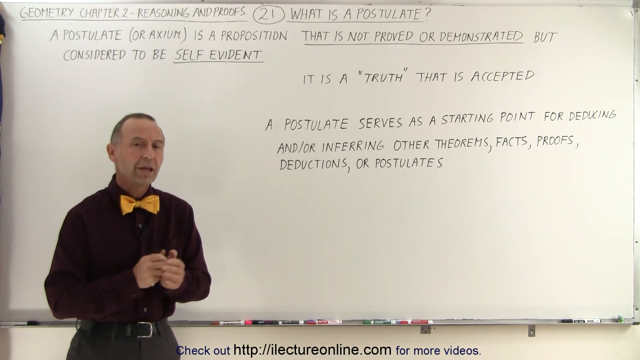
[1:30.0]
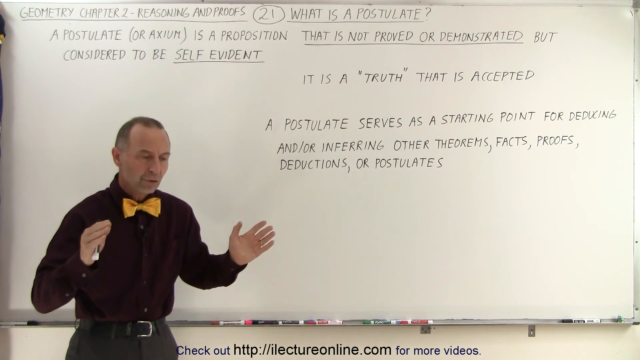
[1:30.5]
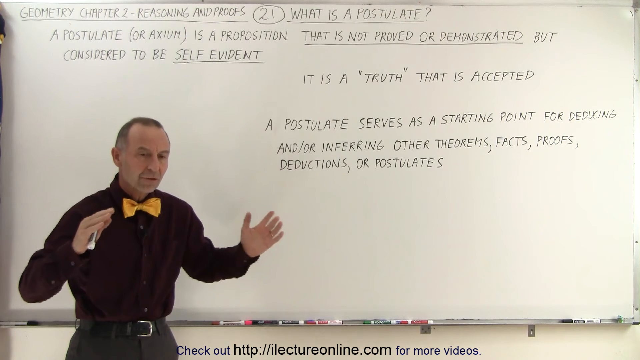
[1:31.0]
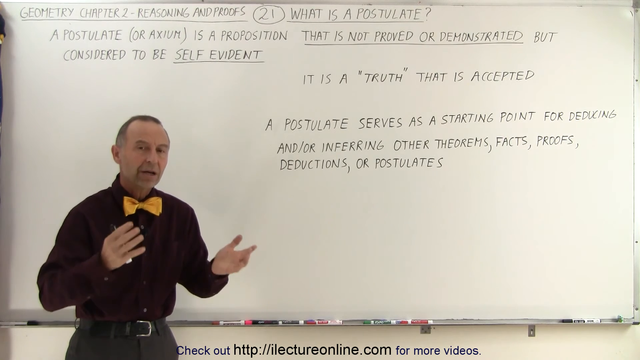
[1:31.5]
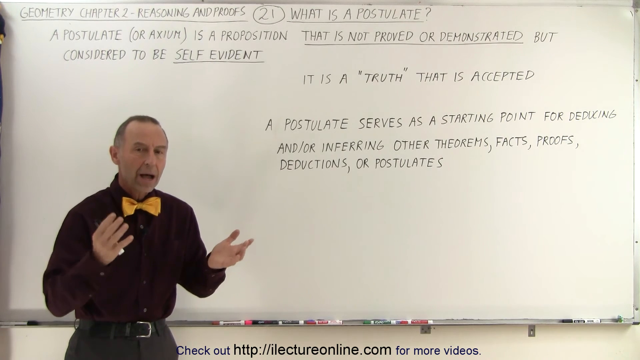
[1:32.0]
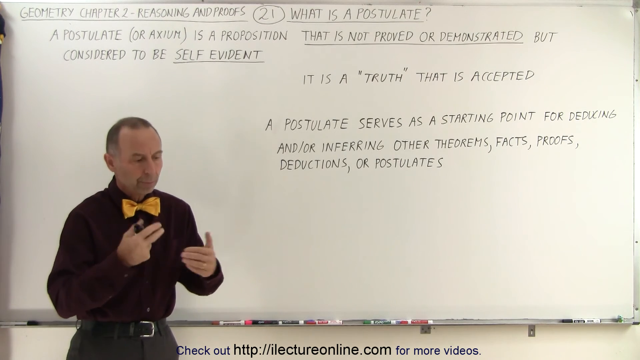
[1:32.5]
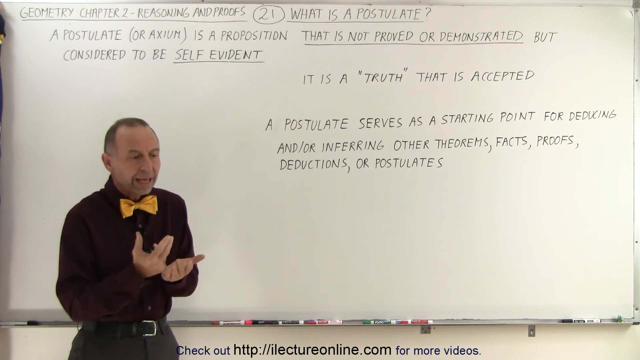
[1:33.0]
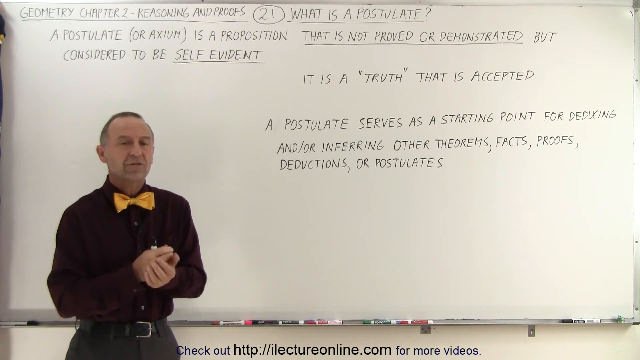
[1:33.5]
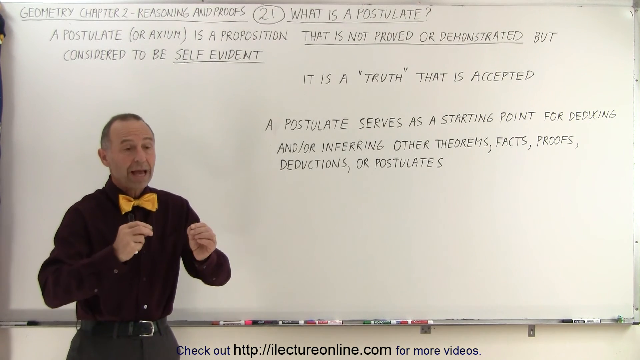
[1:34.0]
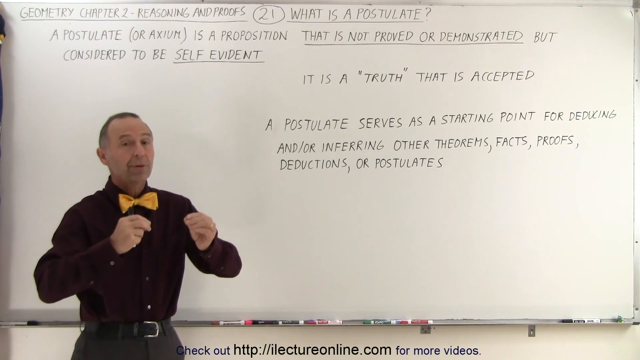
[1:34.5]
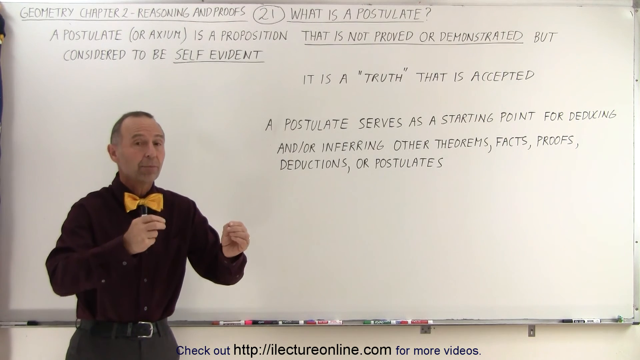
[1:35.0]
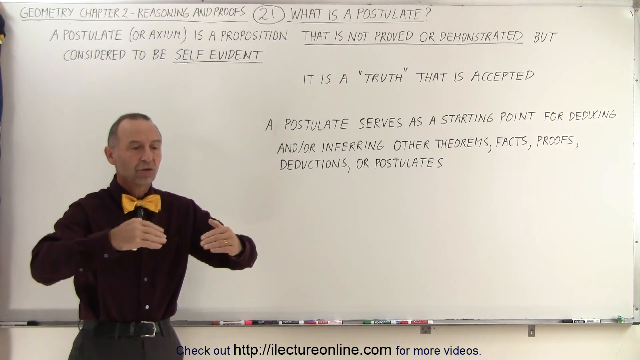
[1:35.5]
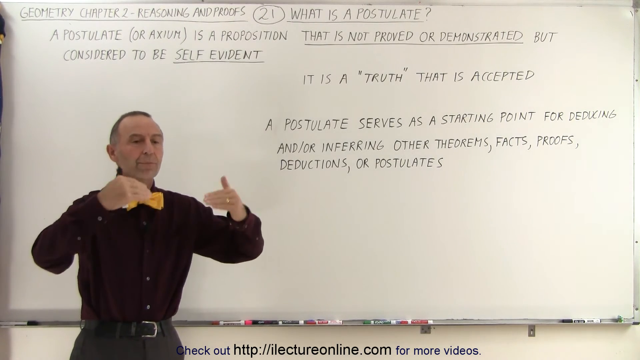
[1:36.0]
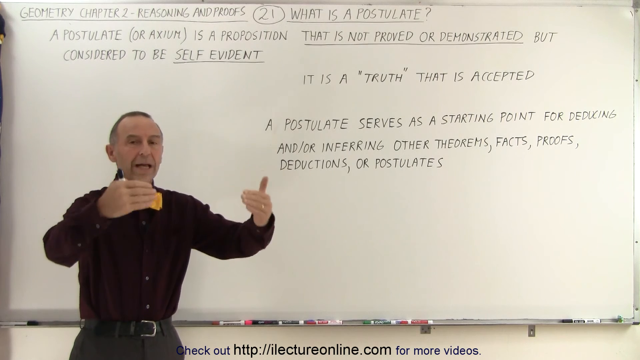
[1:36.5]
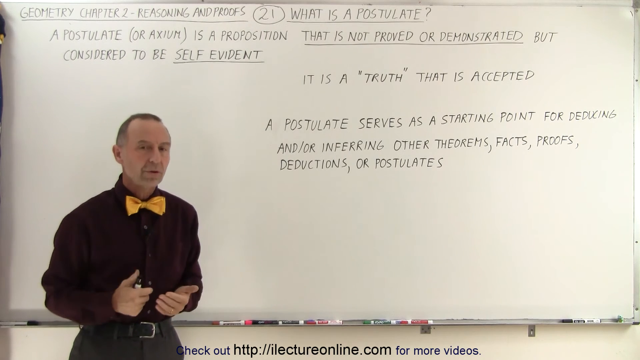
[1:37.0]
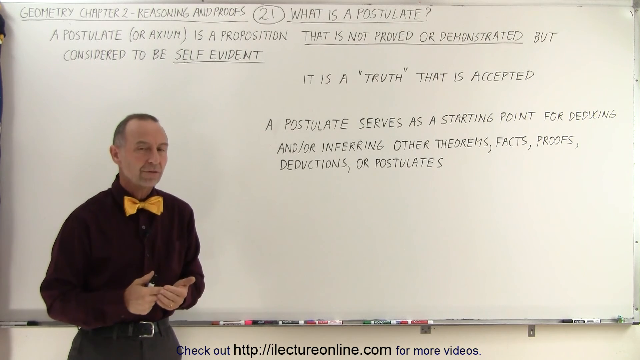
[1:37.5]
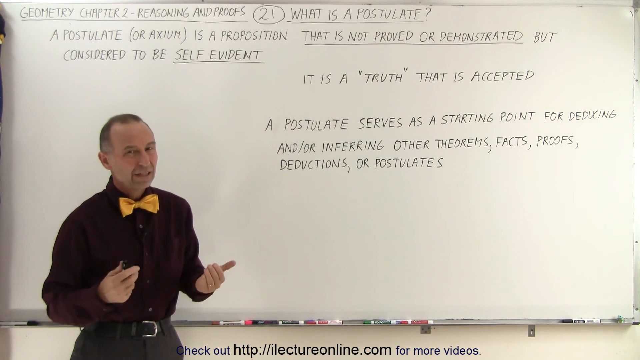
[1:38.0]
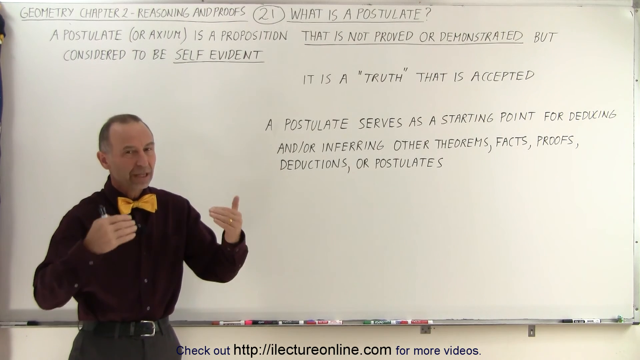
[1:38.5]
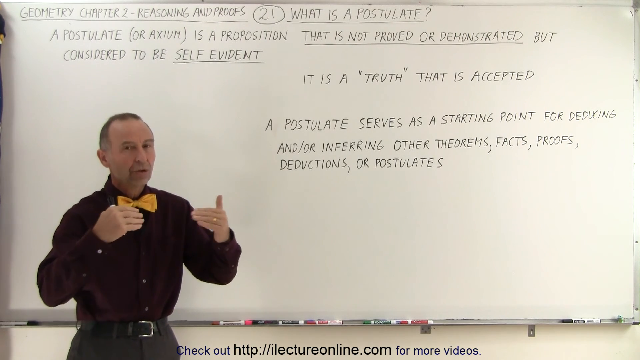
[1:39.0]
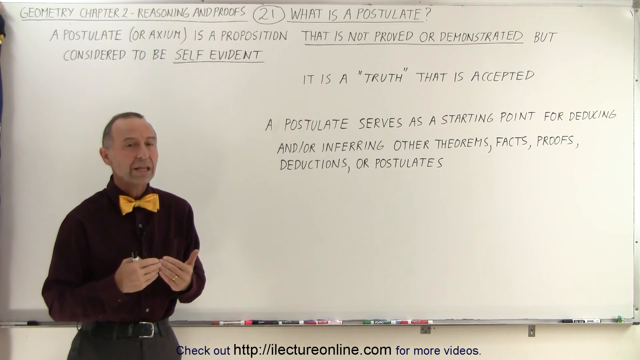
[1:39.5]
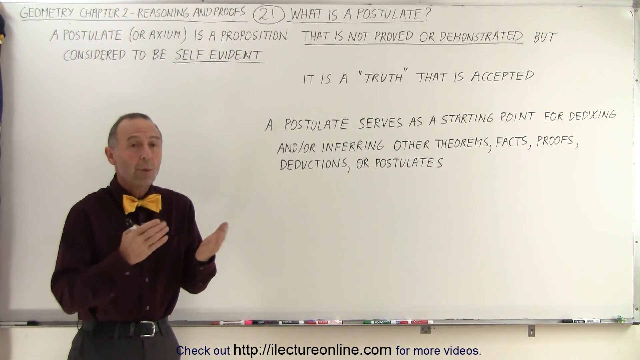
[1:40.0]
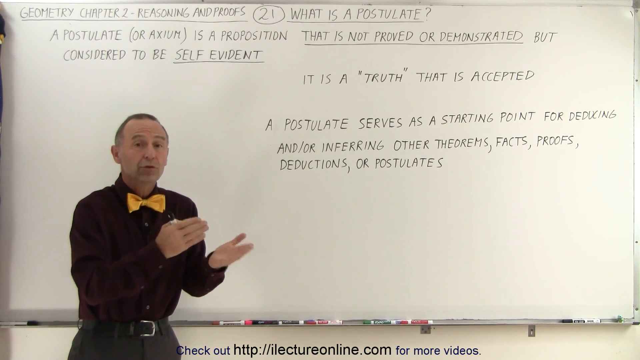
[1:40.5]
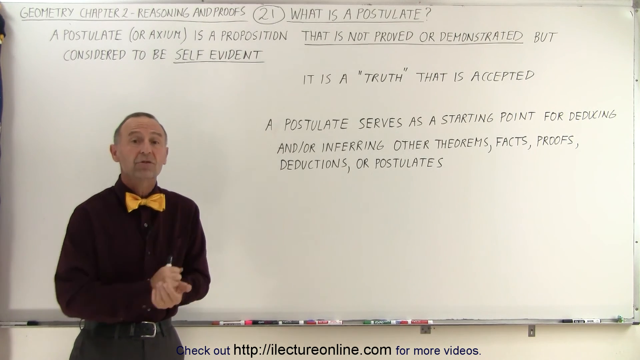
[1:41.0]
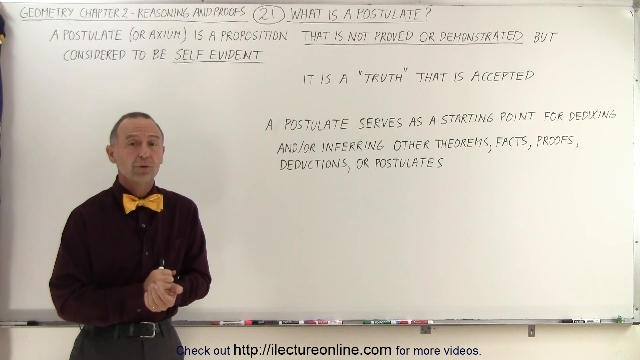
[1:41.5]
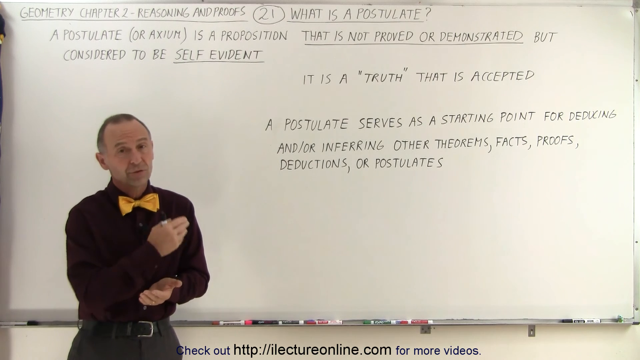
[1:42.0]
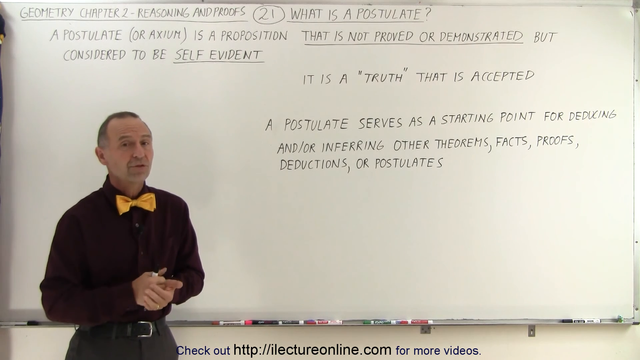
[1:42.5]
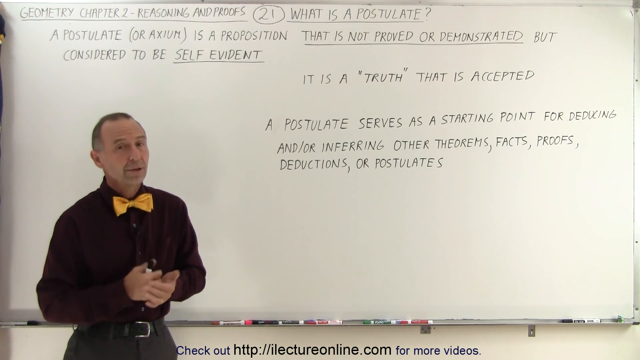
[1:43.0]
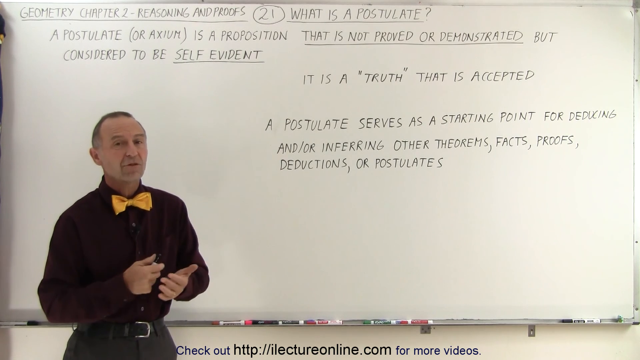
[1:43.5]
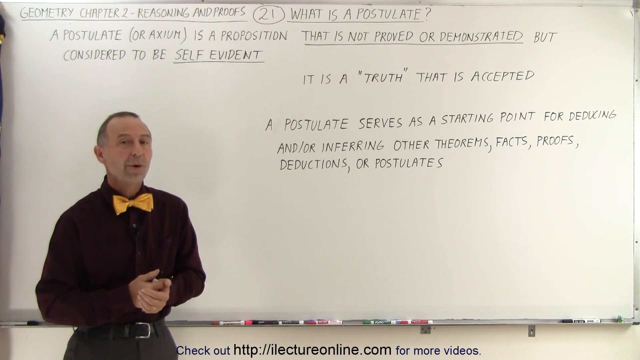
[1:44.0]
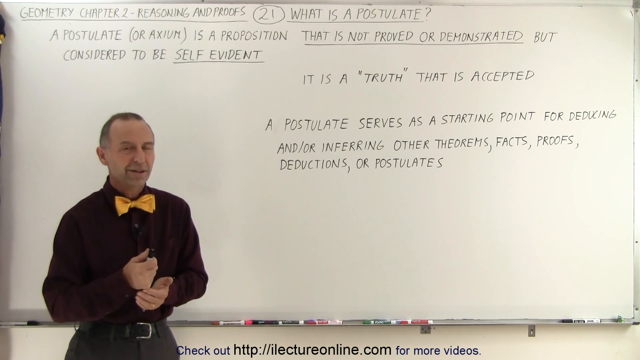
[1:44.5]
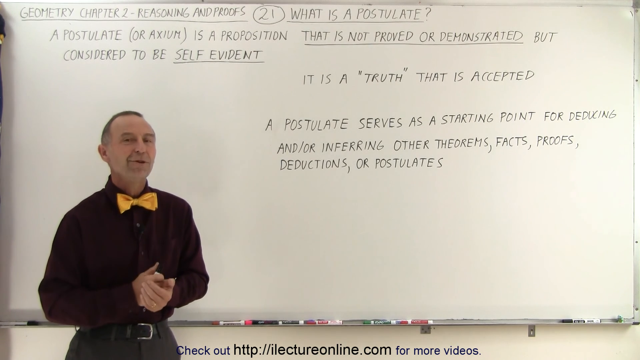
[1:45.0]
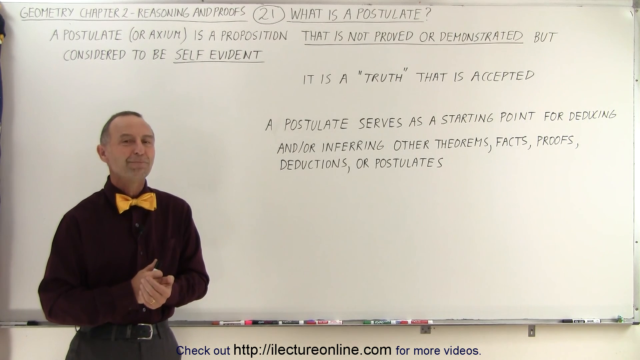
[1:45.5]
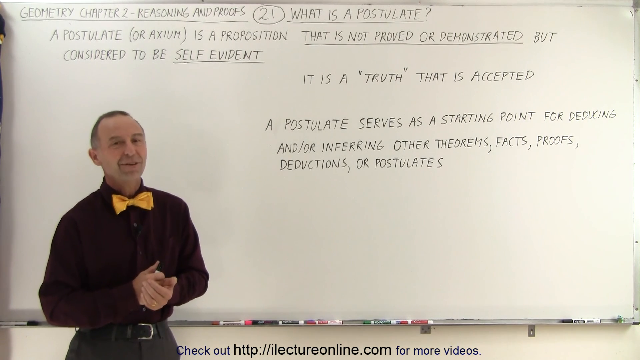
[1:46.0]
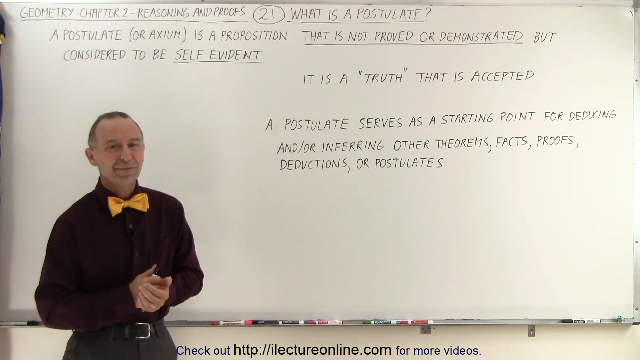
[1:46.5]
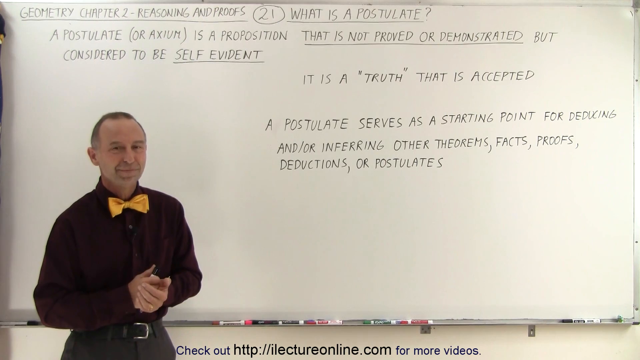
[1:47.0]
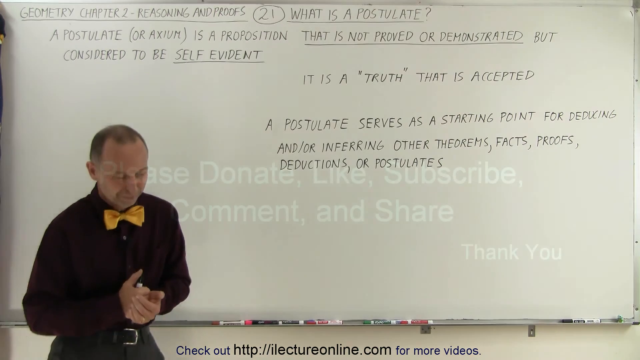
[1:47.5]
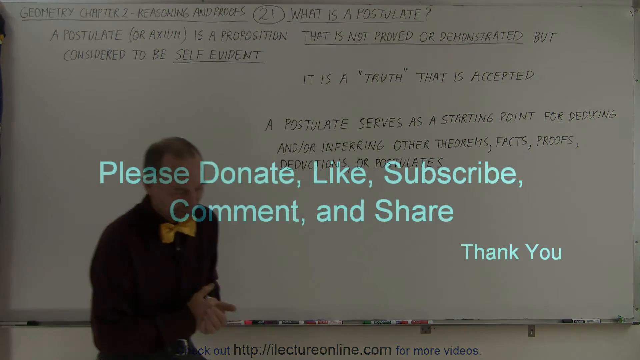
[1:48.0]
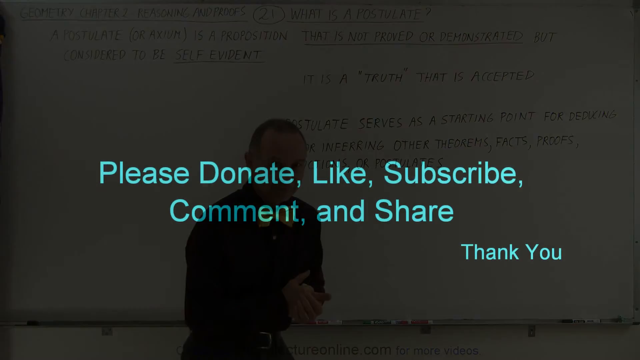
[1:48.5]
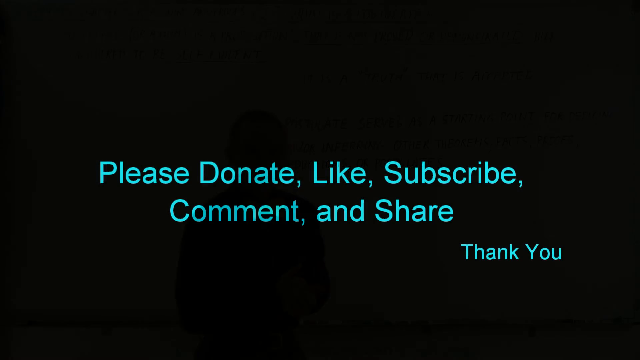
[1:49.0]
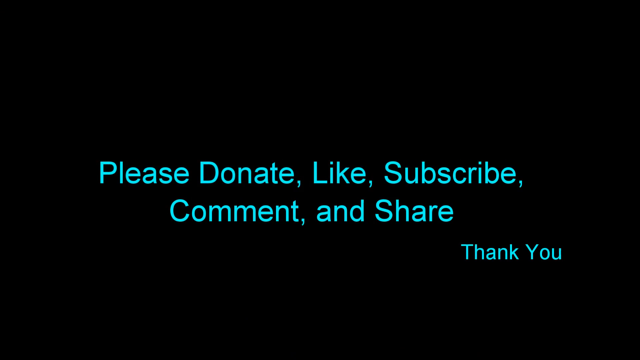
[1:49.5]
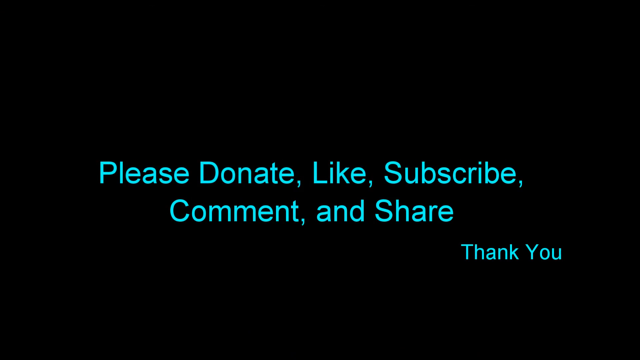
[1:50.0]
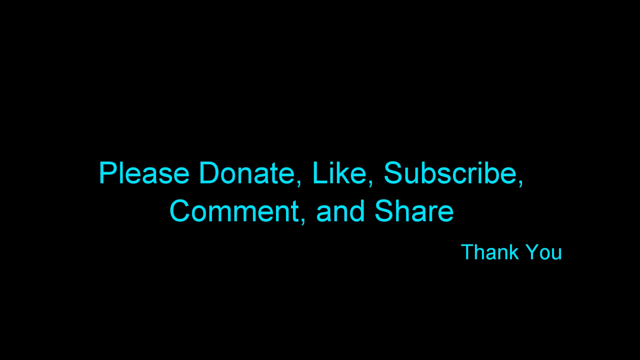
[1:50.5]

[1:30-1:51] The same man appears in his black shirt and black pants. The board shows "Geometry Chapter 2", "reasoning and proofs" and "what is a postulate". He does not write anything additional on the board and seems to wrap up and conclude his lecture. He walks toward the middle and looks as if he is stopping the recording as the picture blacks out. The video fades to black, and a black screen with credits says "please donate, like, subscribe, comment, and share. Thank you."